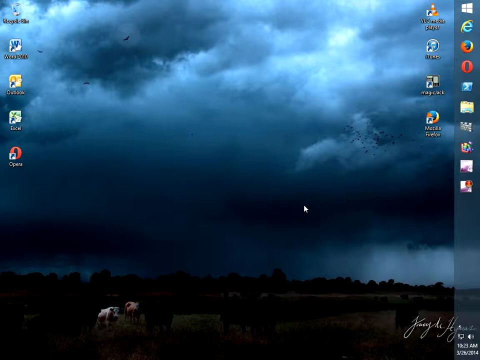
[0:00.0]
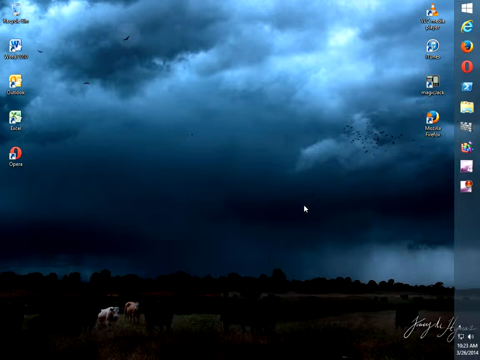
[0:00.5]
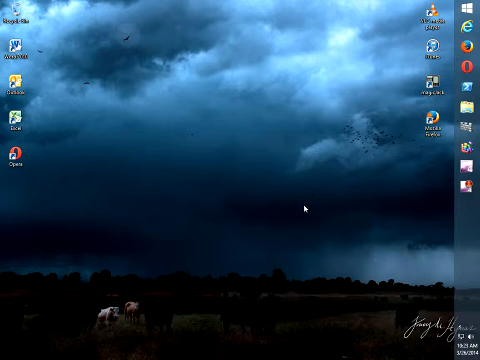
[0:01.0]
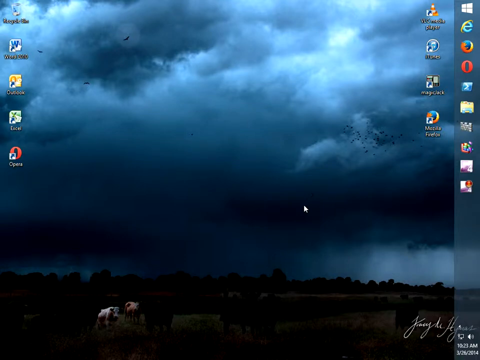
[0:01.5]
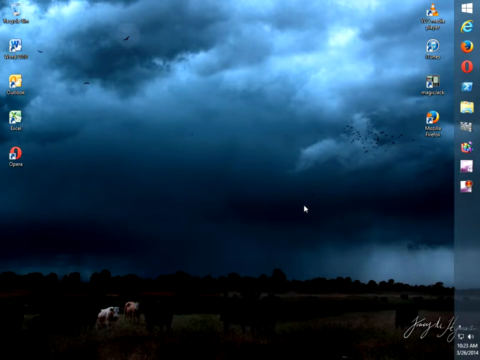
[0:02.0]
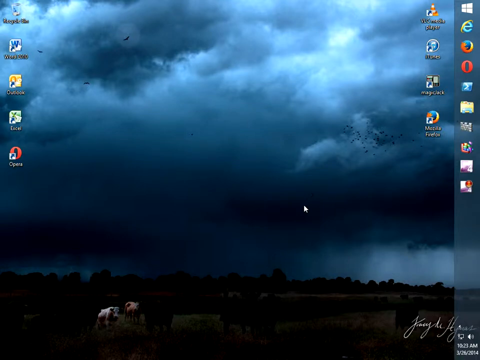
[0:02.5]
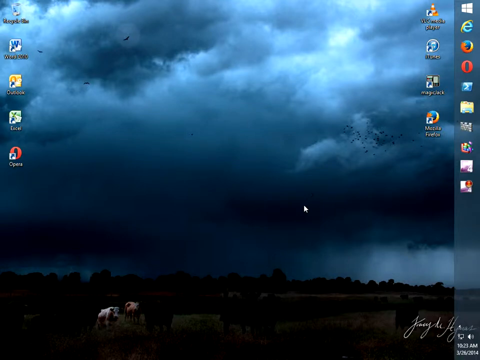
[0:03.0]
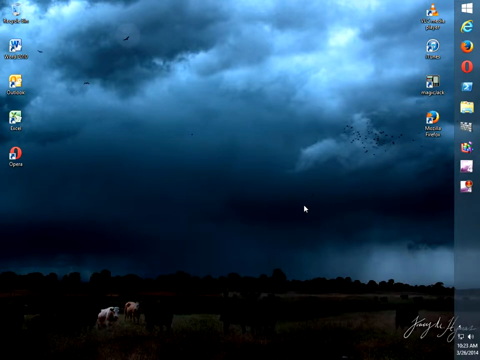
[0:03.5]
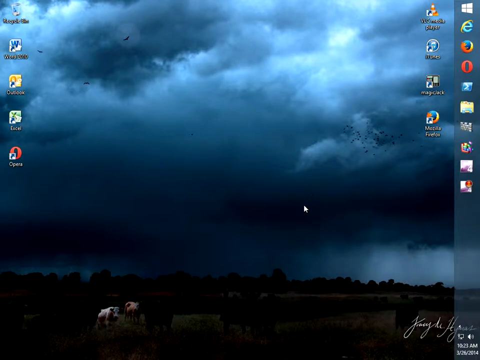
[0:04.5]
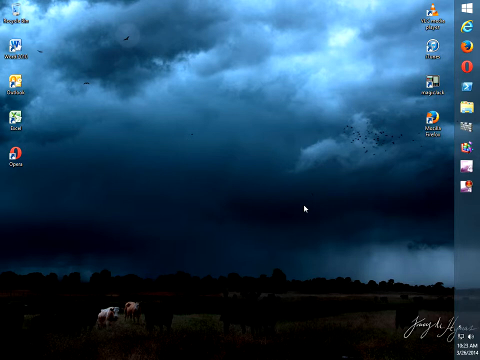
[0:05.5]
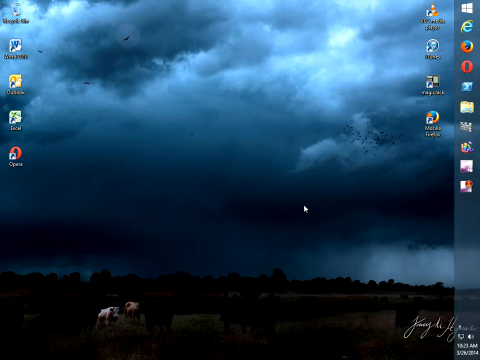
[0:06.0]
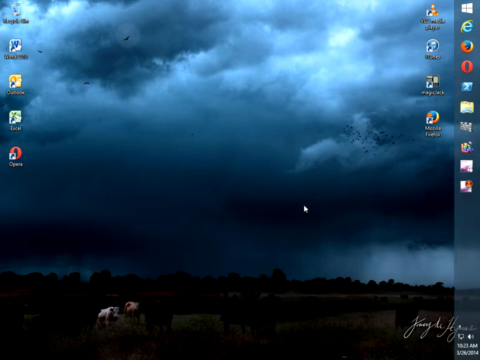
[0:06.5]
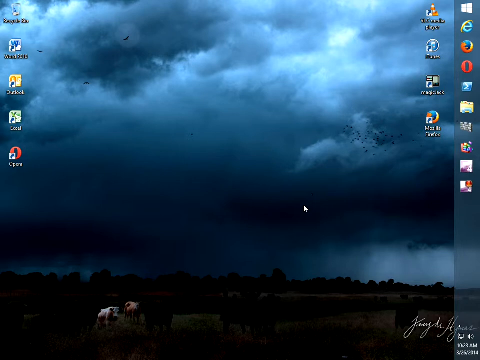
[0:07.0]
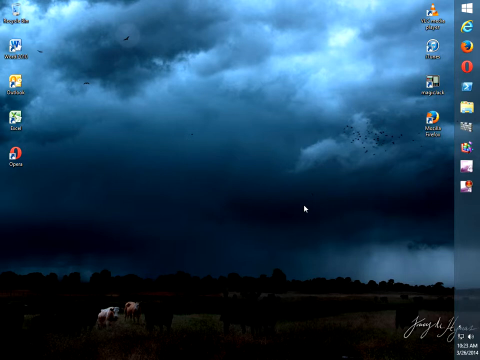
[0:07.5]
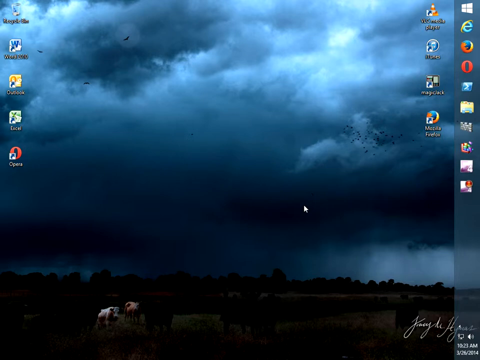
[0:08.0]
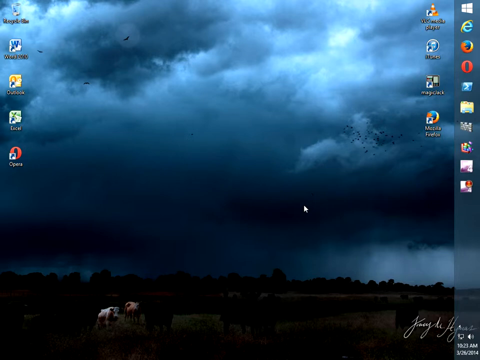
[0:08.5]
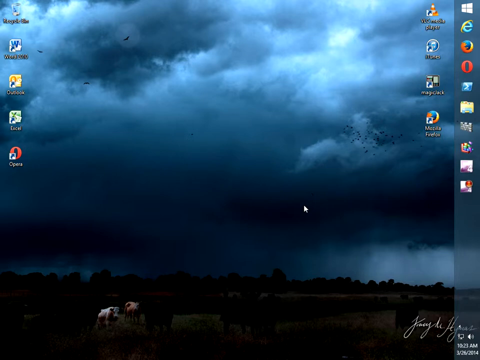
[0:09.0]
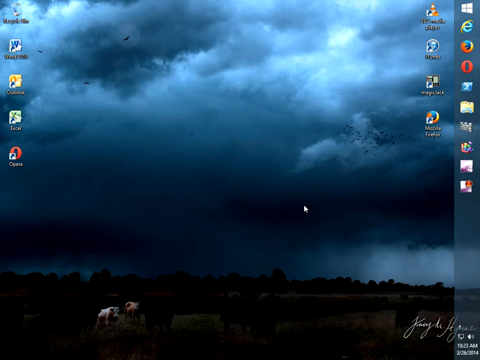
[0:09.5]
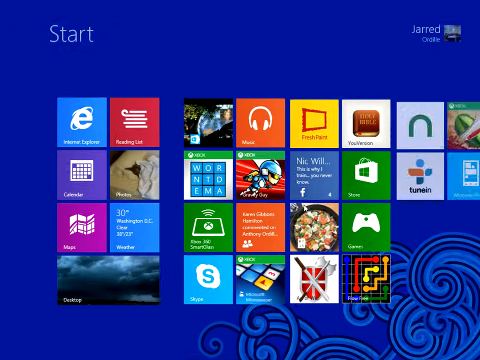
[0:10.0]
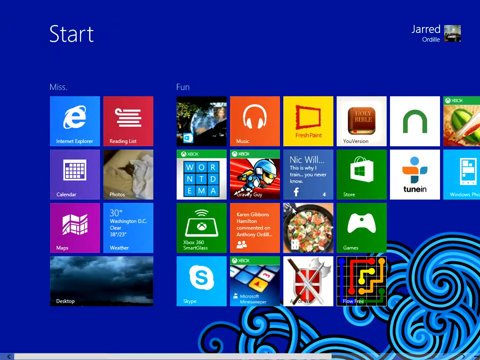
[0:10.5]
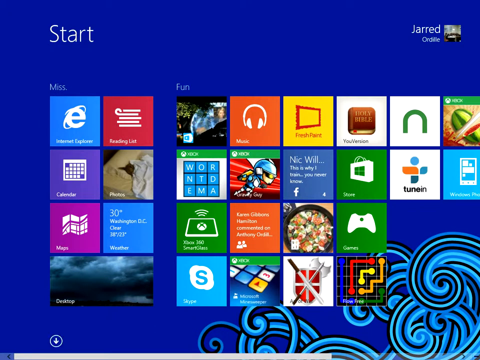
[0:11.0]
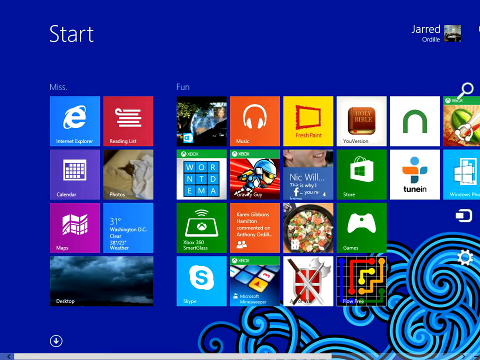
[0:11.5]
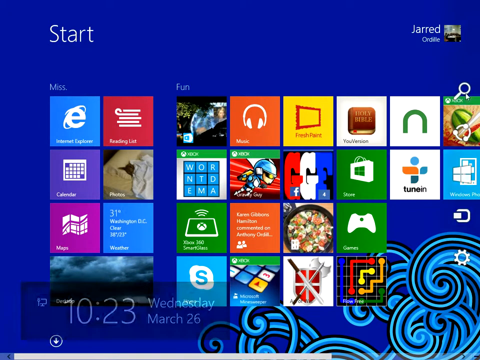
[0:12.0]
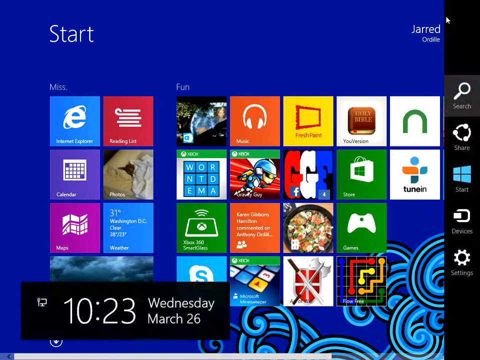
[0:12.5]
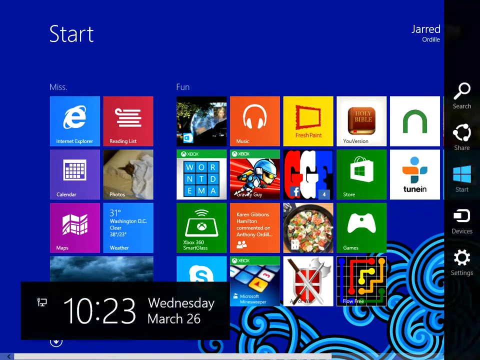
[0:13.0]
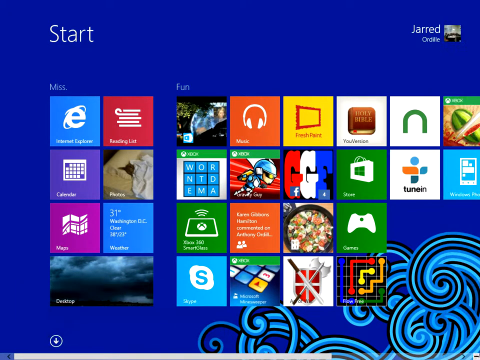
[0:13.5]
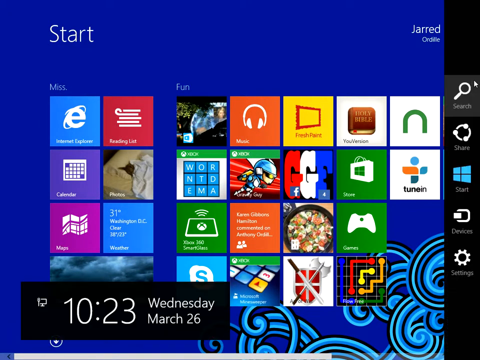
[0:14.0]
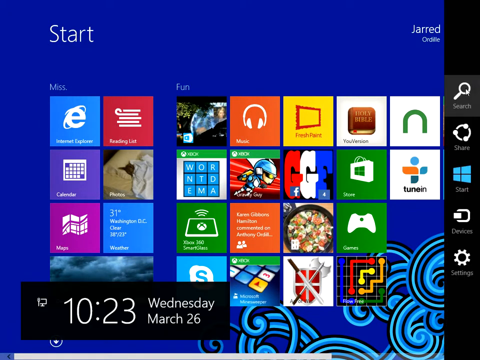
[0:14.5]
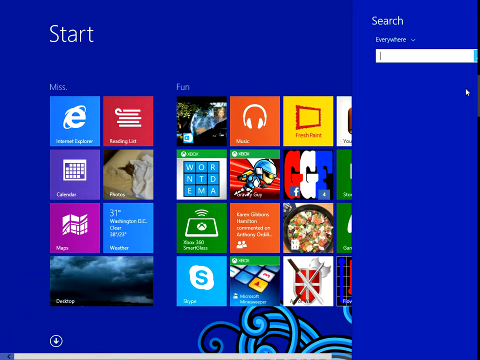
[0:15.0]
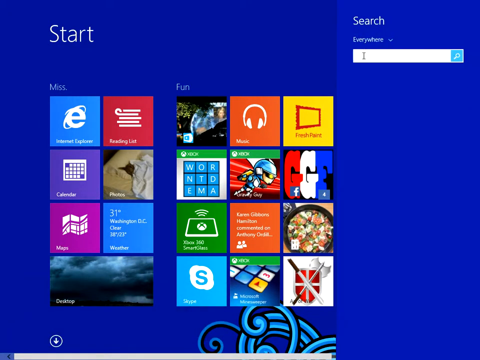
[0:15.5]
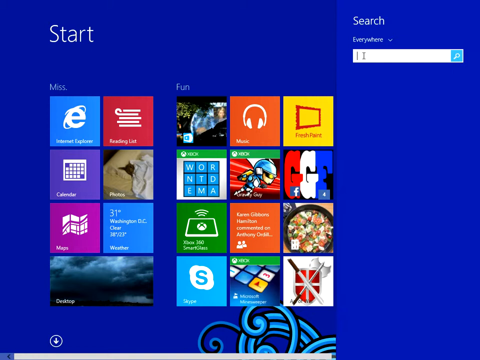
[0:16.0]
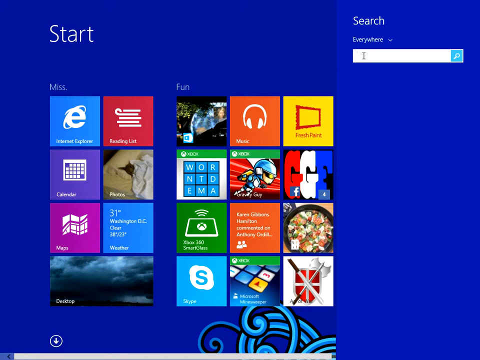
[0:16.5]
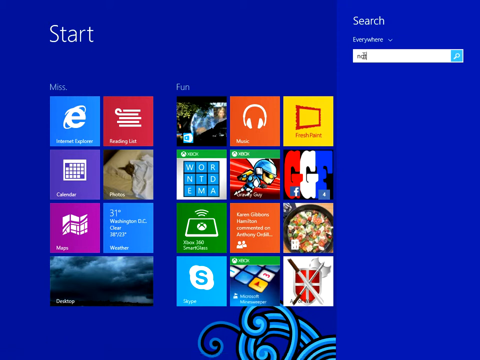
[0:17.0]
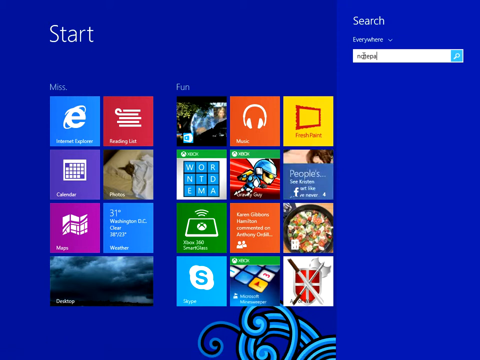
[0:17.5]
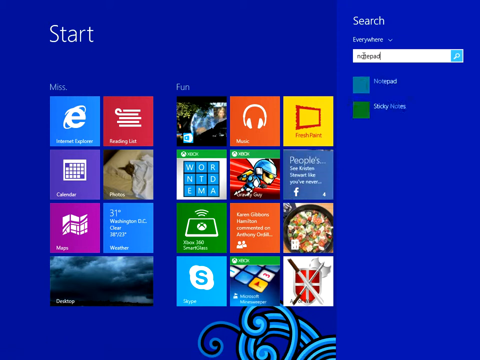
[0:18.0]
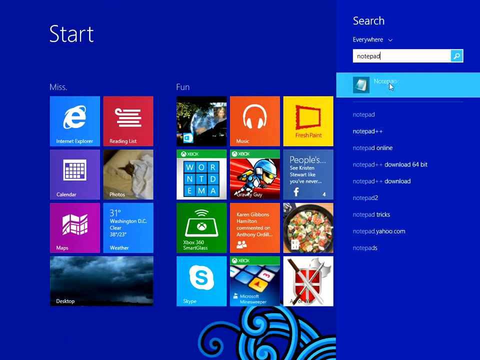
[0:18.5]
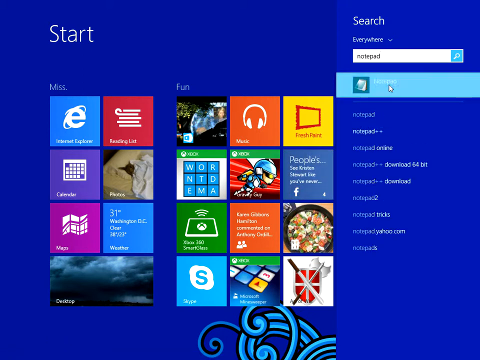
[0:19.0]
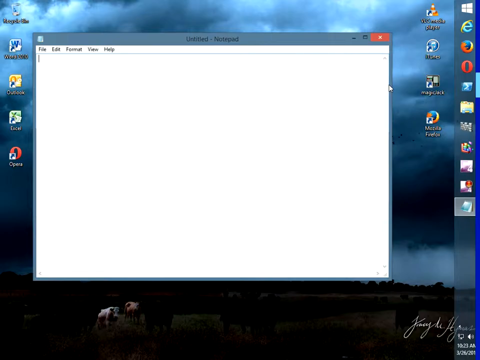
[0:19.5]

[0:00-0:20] A Windows desktop appears, though which version of Windows is not clear. On the left-hand side are a recycle bin, Microsoft Word, what looks like Outlook, Excel, and a web browser. On the right-hand side there is what looks like AOL, two other unidentified items, and Mozilla Firefox. In the upper right are the Windows start screen, Explore, Firefox, and some folders. The background is a very dark sky that looks like a massive thunderstorm, and there appear to be two bears or cows in the bottom left-hand corner. The view holds on the desktop, then the mouse opens the Windows start screen, apparently Windows 8, with a blue background on the right-hand side. Search is opened, "notepad" is typed, and Microsoft Notepad opens.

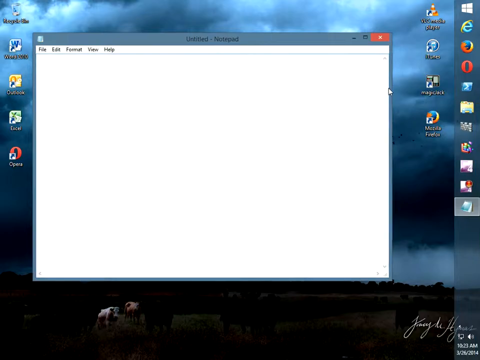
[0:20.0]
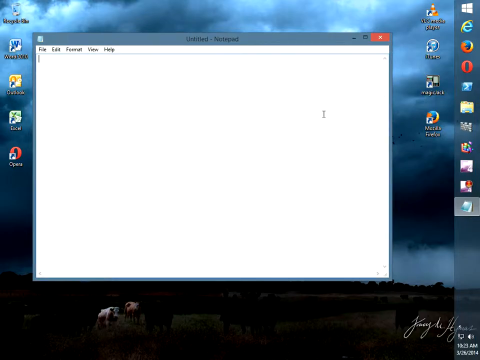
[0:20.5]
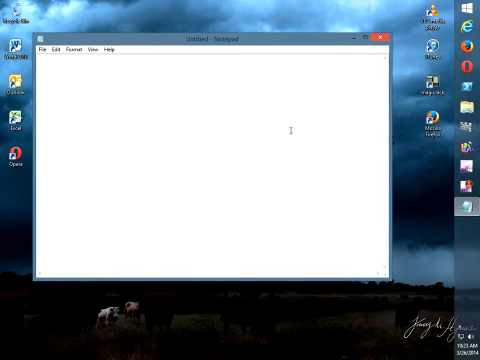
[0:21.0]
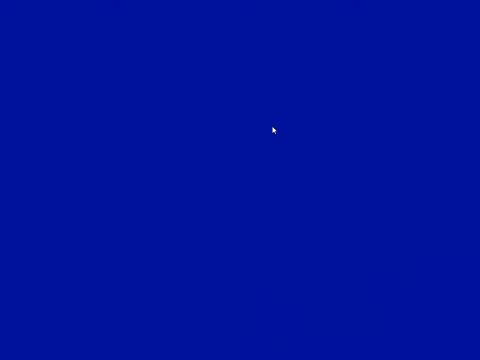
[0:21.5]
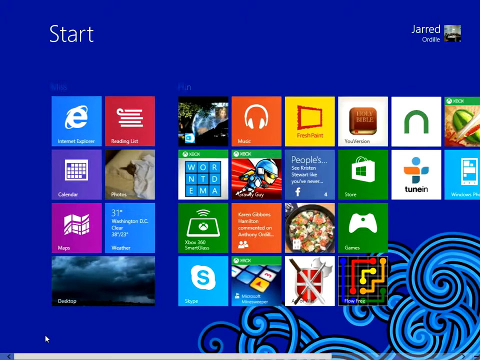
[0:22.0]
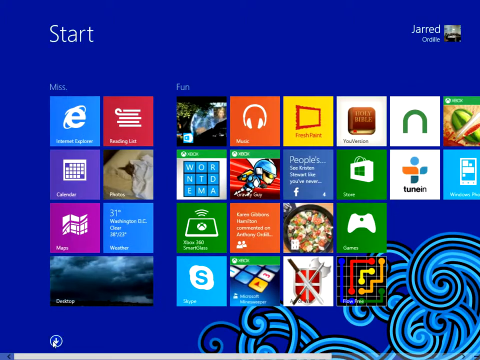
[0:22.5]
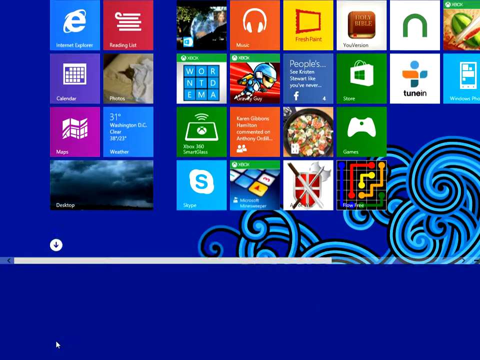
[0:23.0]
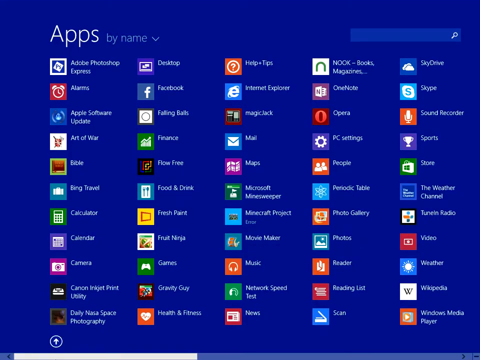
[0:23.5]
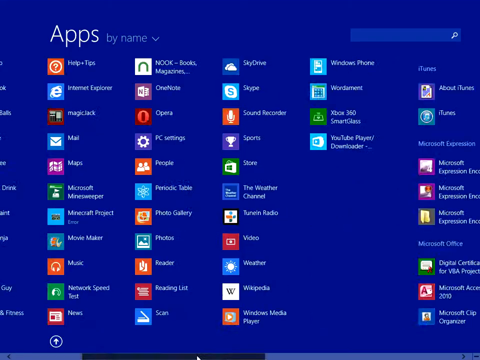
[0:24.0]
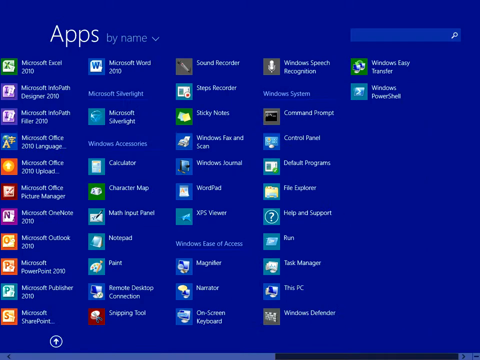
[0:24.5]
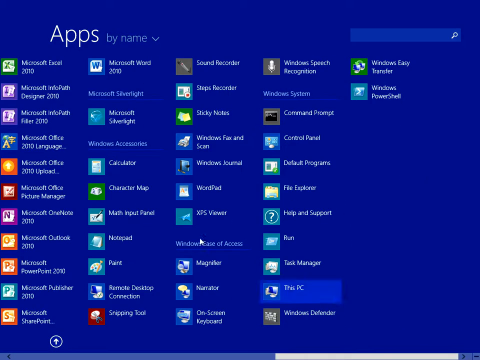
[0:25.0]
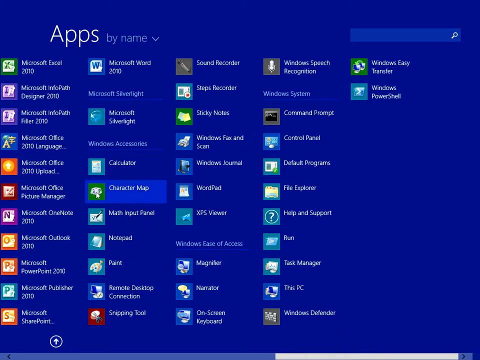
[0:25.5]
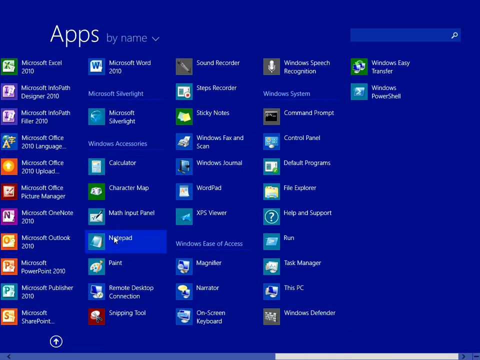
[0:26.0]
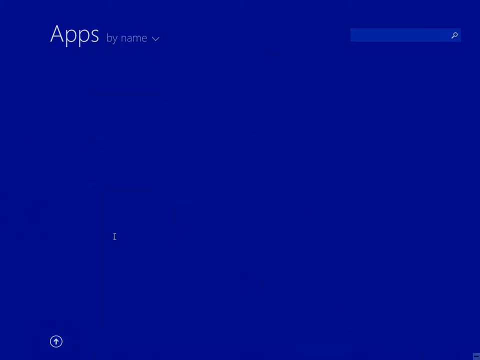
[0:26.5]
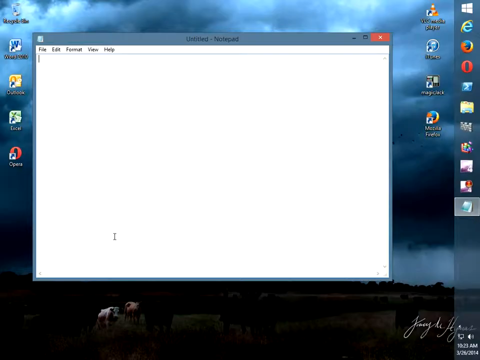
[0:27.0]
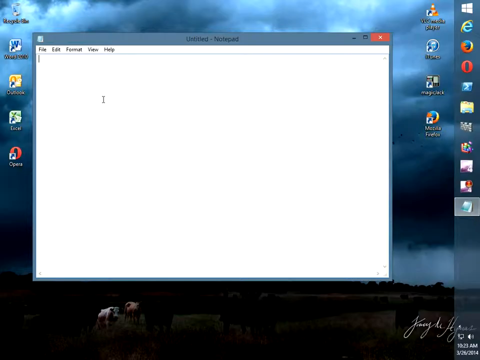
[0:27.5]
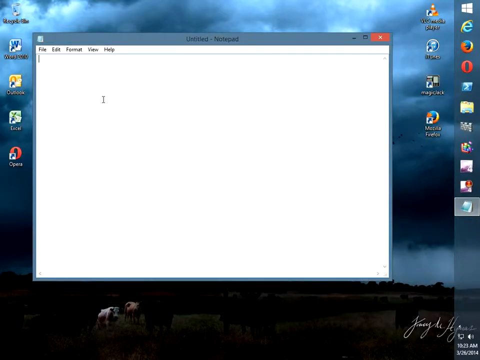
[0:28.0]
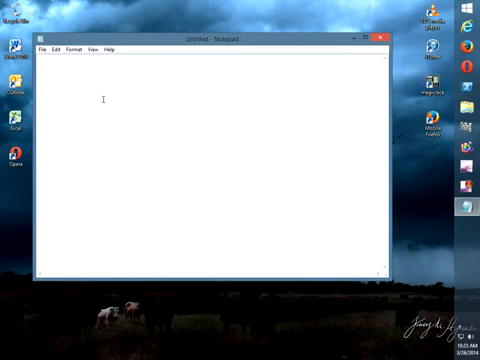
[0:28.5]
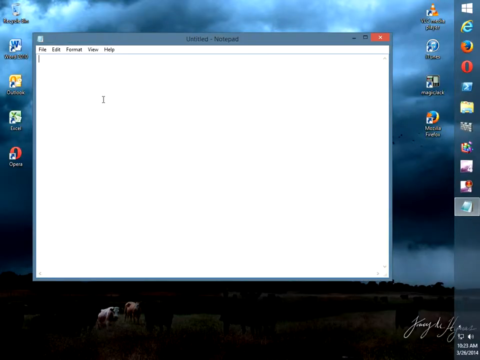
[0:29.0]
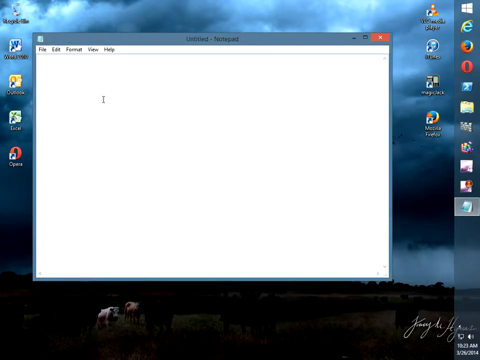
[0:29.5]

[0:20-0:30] The dark blue, stormy-looking sky background is visible as Microsoft Notepad opens with a big white screen. The cursor moves around, and the window is closed. The user then goes into the apps, looks for something, and clicks on Notepad, which reopens with a flashing icon in the upper left. The screen then holds with nothing happening.